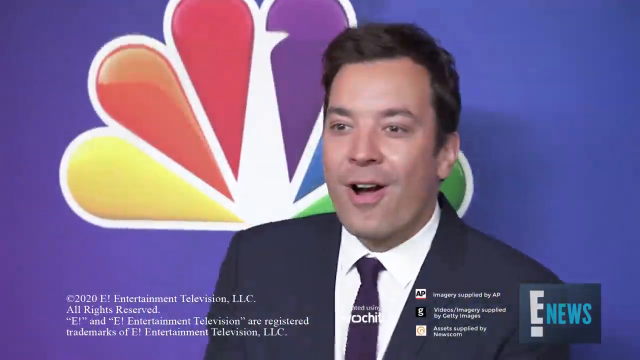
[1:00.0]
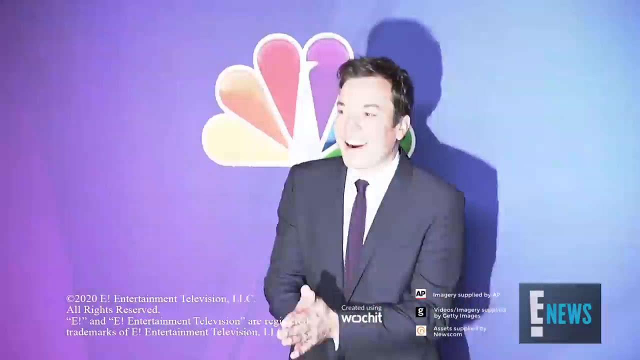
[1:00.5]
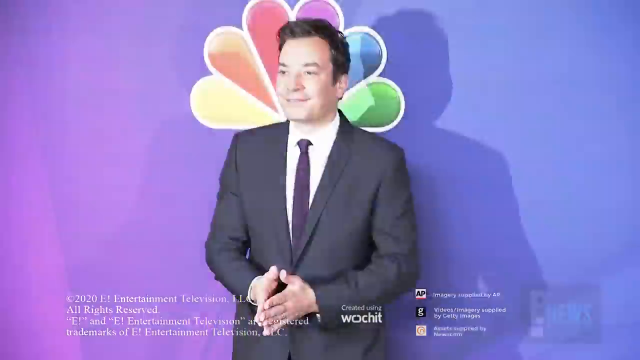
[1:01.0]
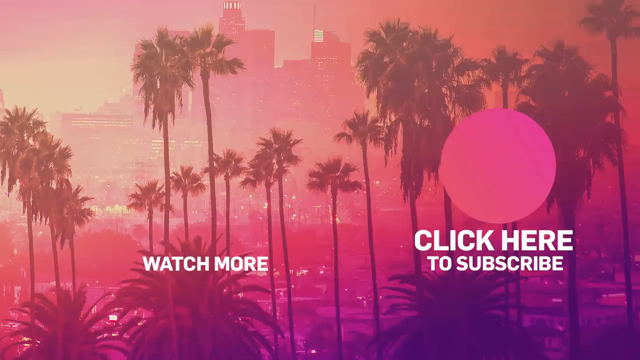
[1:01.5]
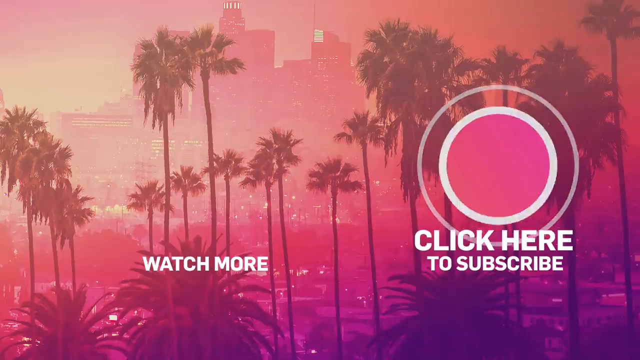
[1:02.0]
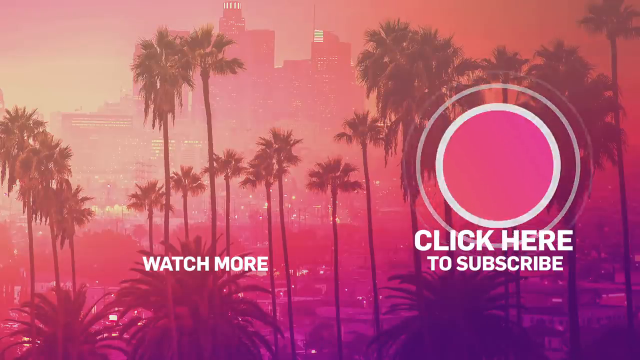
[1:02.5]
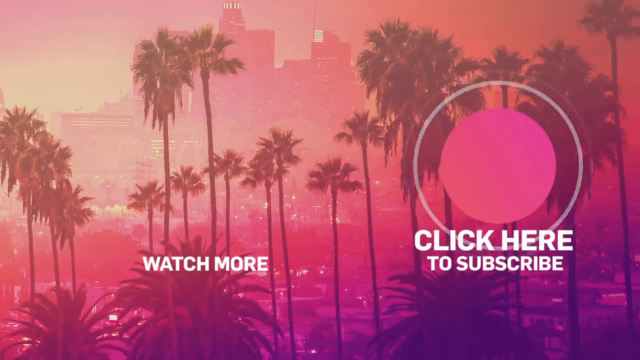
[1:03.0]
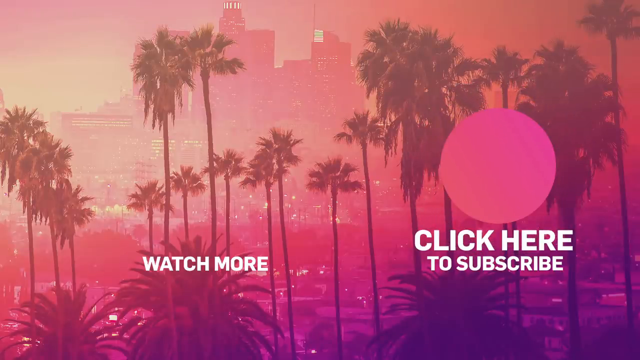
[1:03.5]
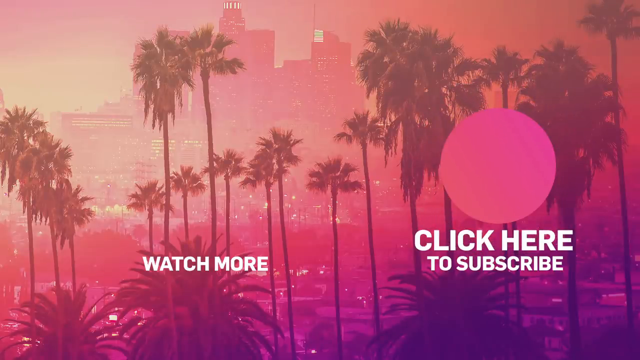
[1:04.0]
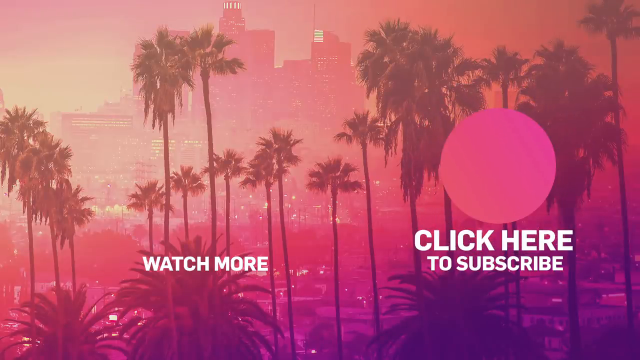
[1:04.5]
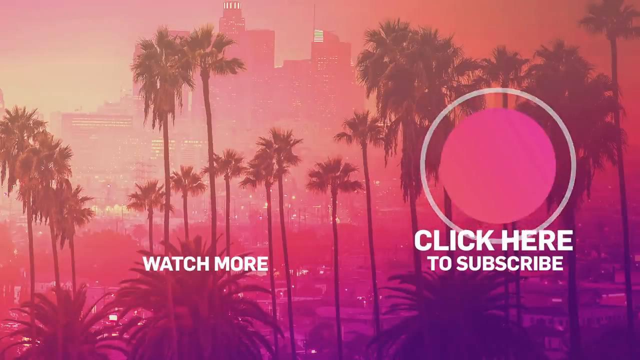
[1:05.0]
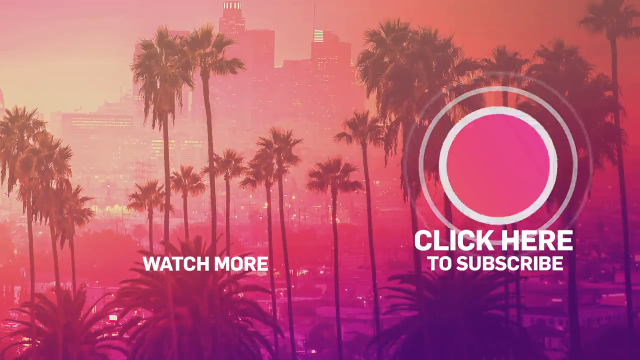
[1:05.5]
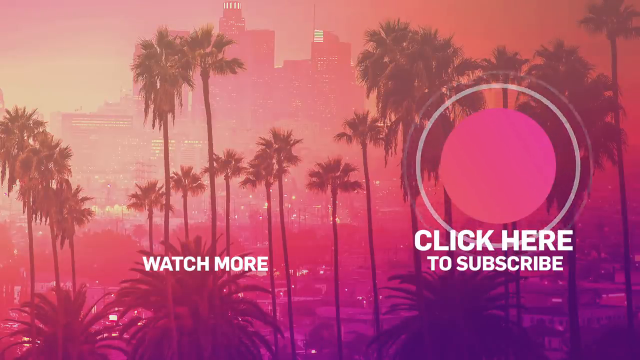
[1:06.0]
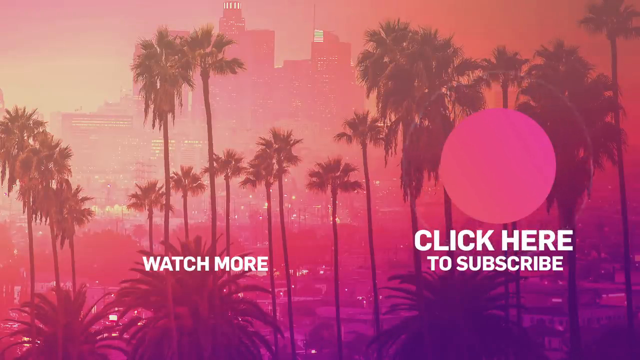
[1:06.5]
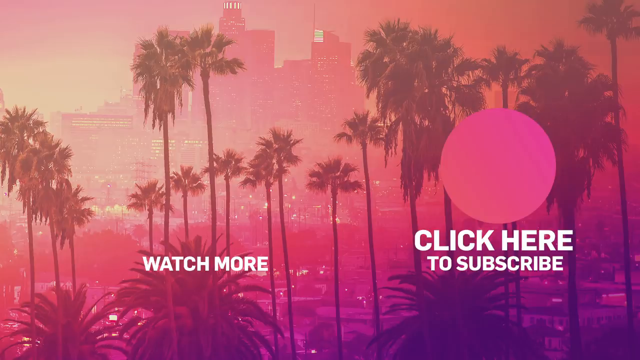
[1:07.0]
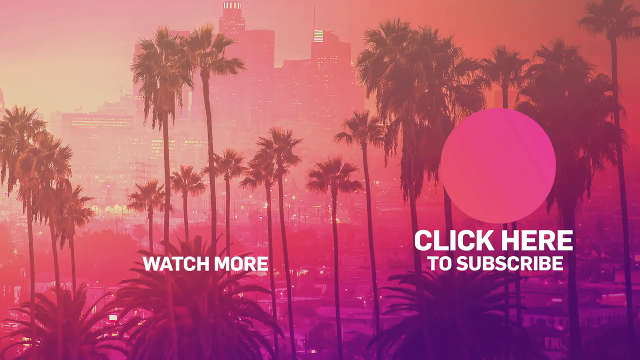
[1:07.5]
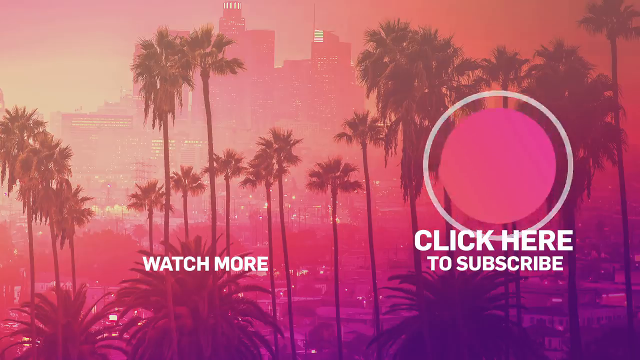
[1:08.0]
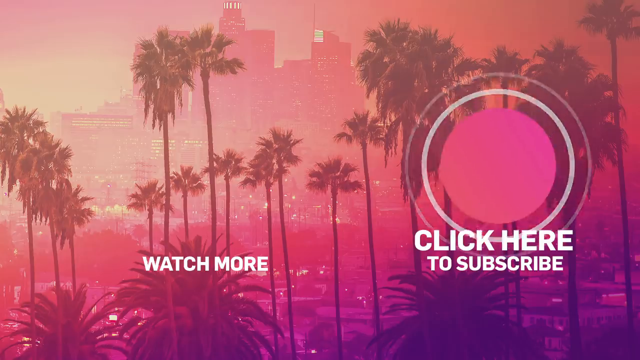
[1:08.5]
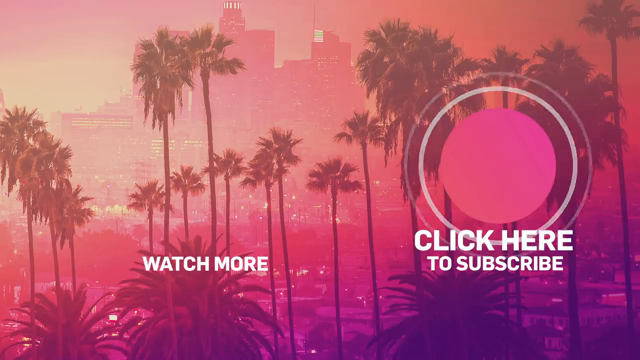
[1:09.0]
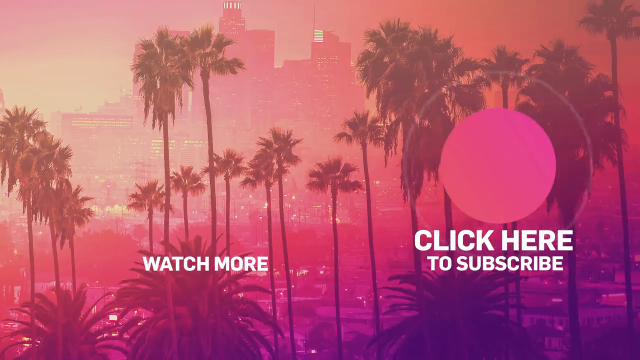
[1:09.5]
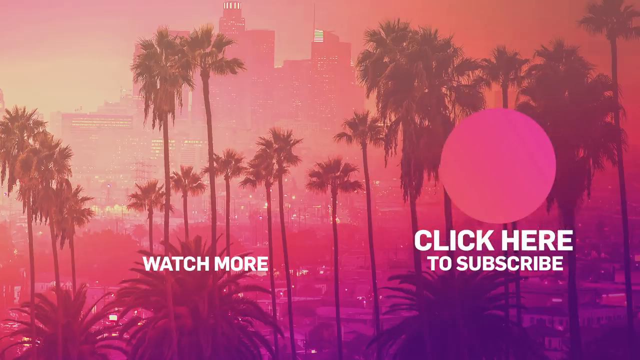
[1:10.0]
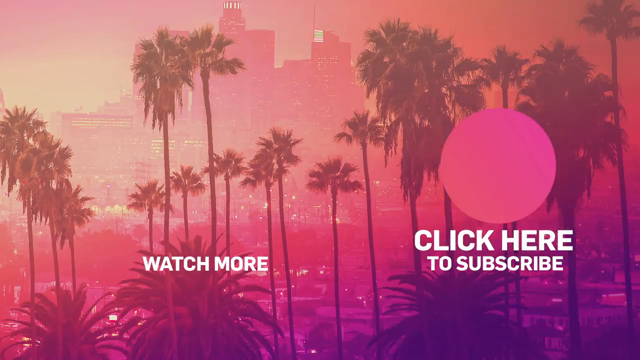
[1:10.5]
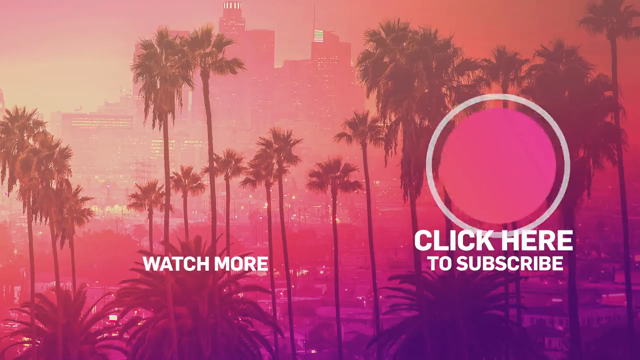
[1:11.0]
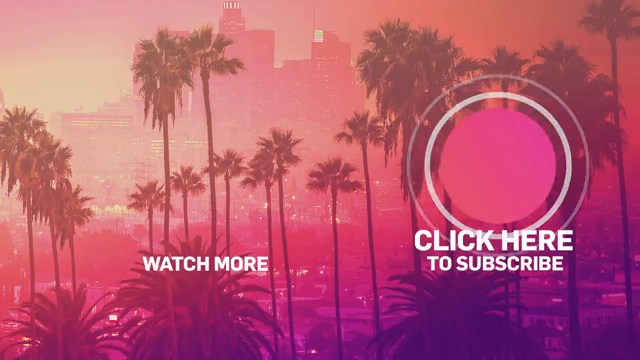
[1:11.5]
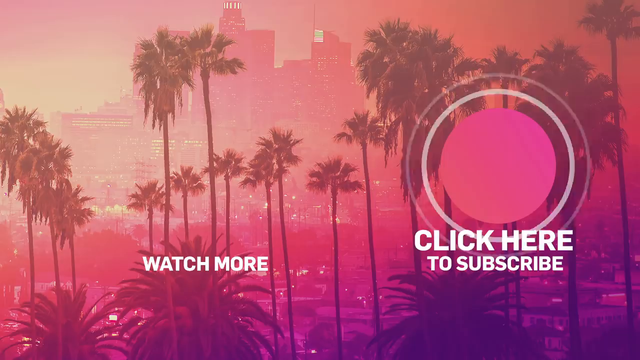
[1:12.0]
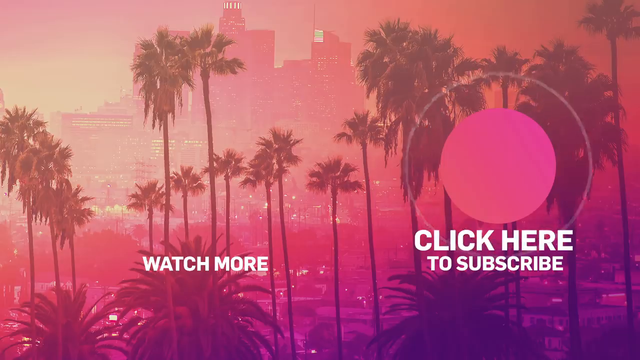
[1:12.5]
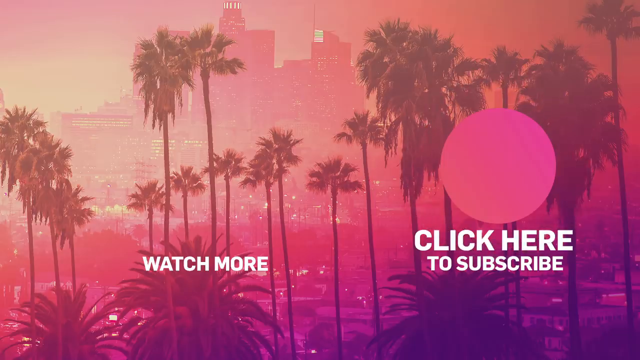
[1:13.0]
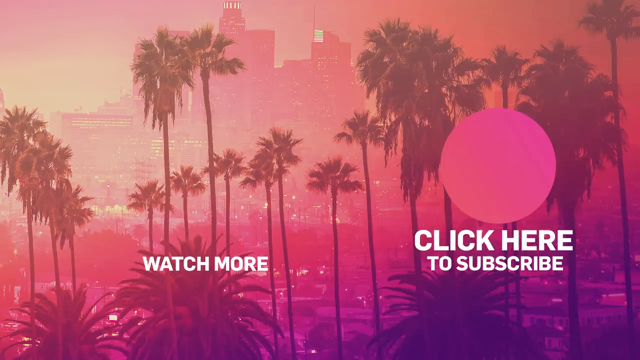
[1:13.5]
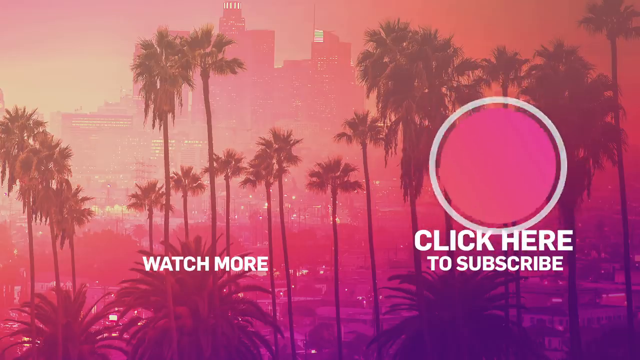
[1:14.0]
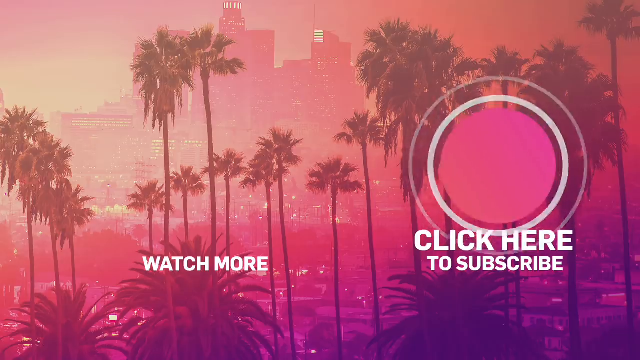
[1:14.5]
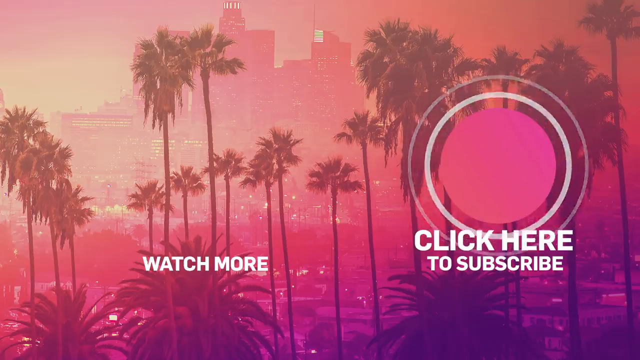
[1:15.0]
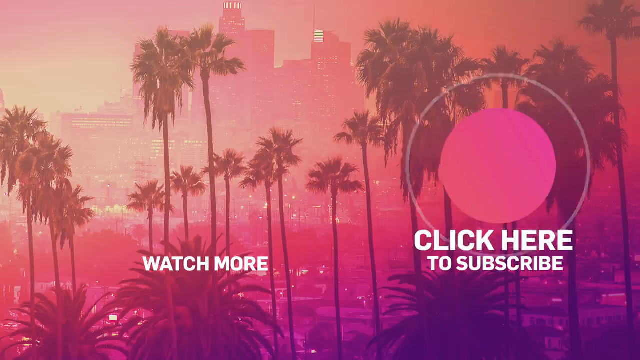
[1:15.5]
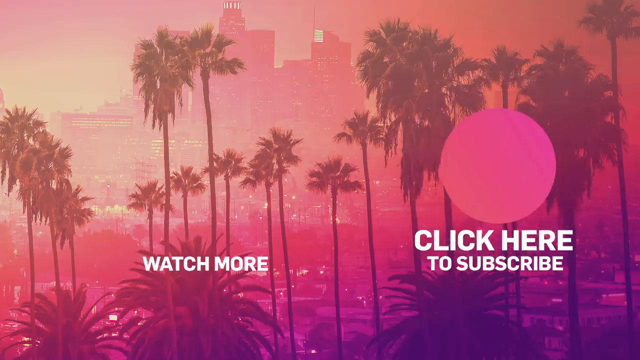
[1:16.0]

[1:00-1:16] Jimmy stands in front of a purple background with a large NBC peacock logo behind him. He wears a dark suit, a white shirt and a tie, faces slightly toward the camera, and smiles while photographers take photos of him. The video then transitions to an end screen with a vivid sunset gradient and silhouettes of tall palm trees and thin city buildings. Large text on the left reads "watch more," and on the right a circular graphic contains "click here to subscribe." The whole design uses bright pink, orange and purple tones, giving it a tropical entertainment-style look. The call to action to subscribe, watch more and view more appears in pink and red.